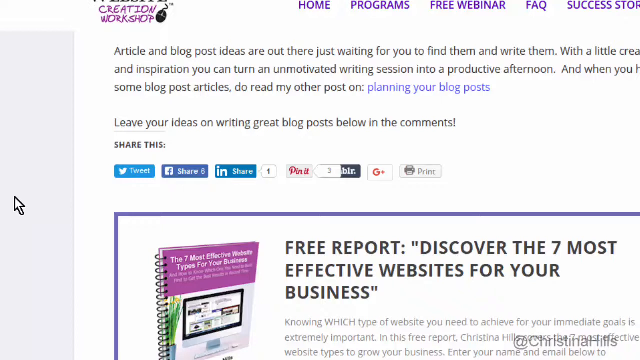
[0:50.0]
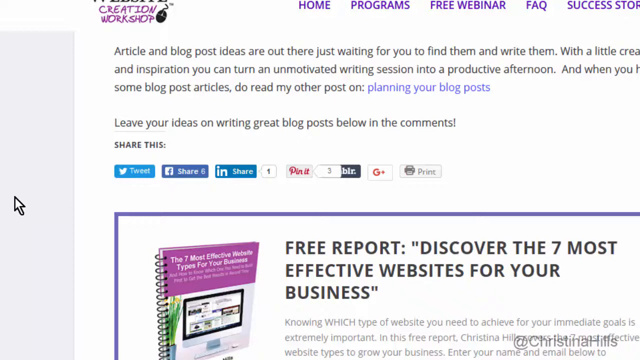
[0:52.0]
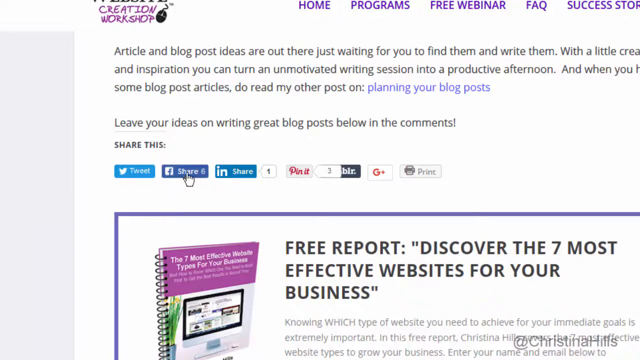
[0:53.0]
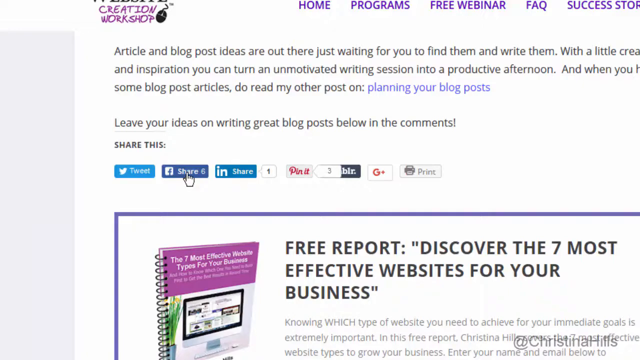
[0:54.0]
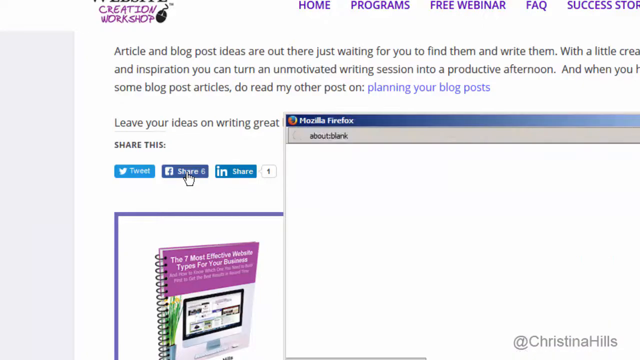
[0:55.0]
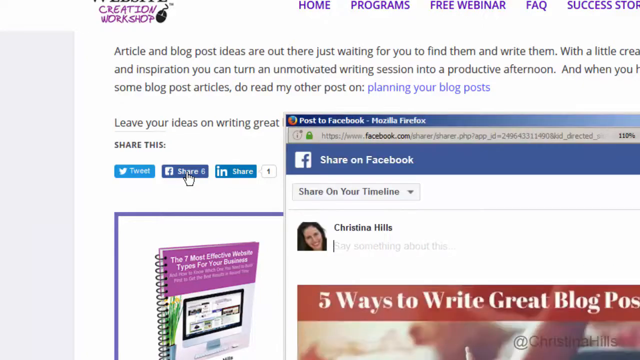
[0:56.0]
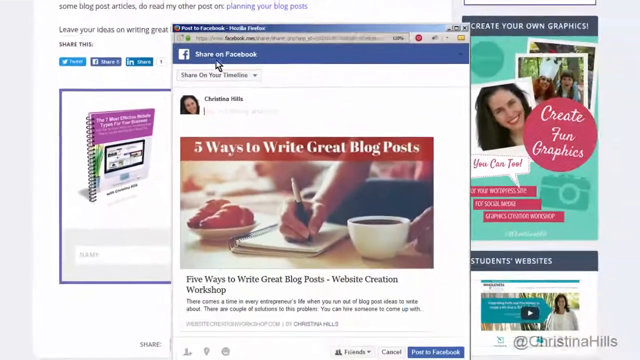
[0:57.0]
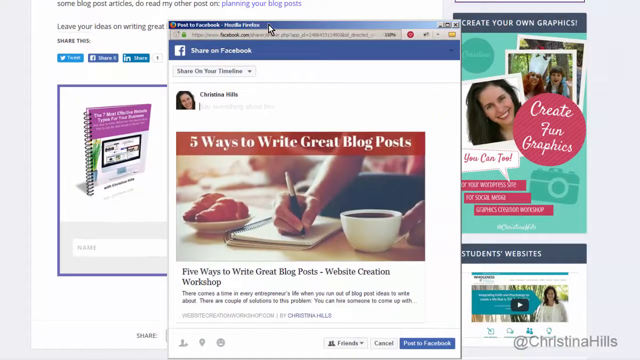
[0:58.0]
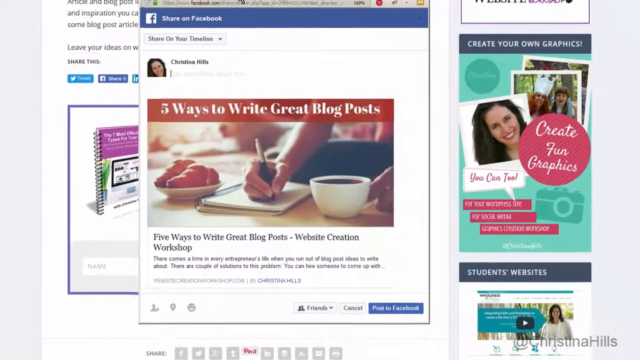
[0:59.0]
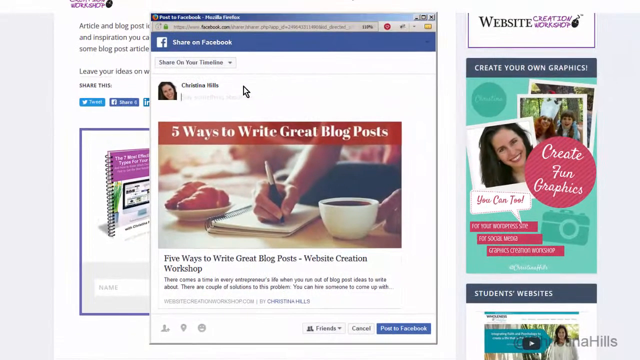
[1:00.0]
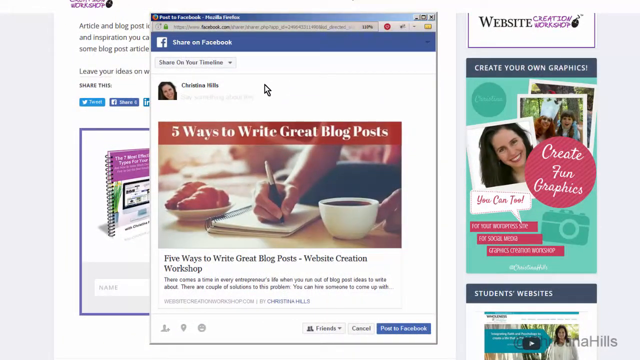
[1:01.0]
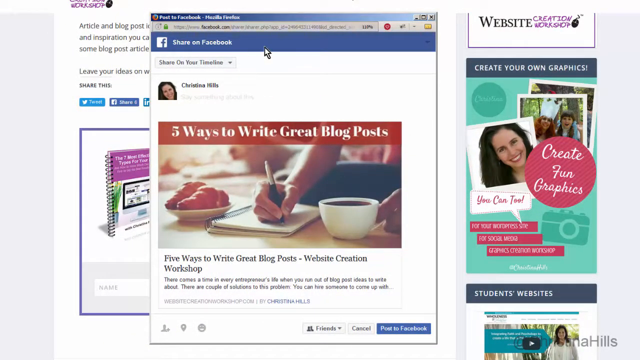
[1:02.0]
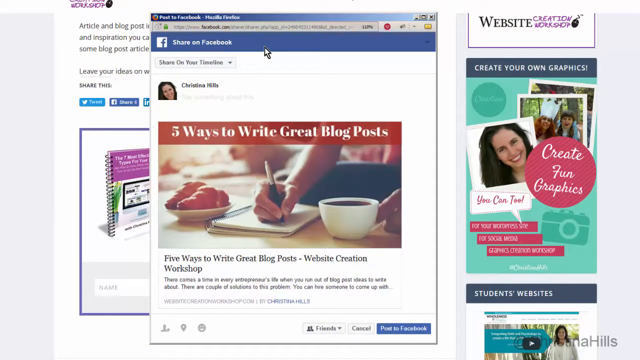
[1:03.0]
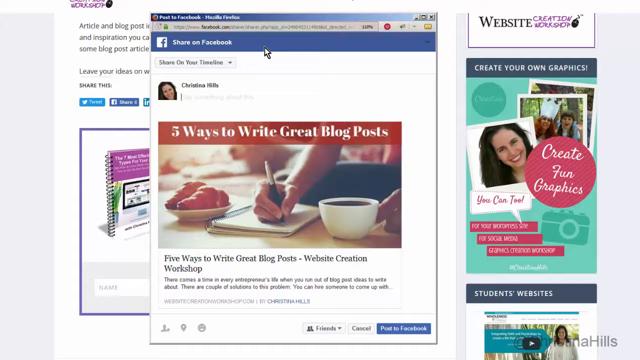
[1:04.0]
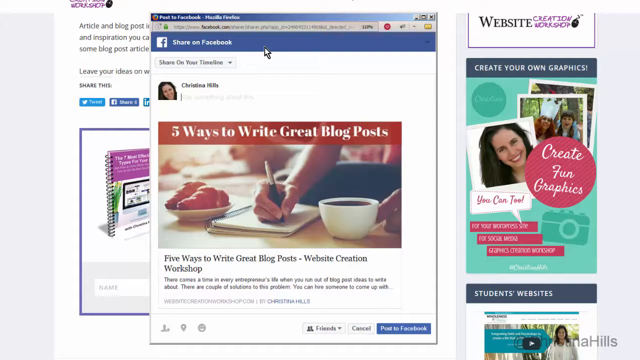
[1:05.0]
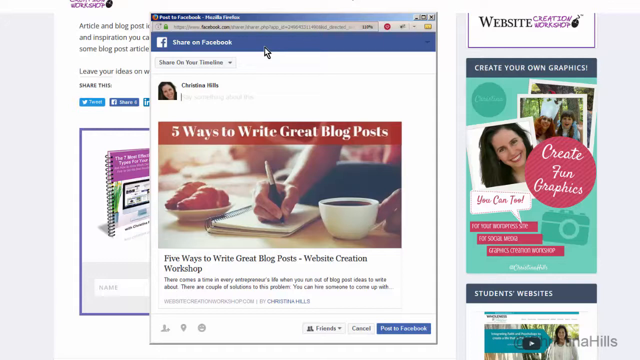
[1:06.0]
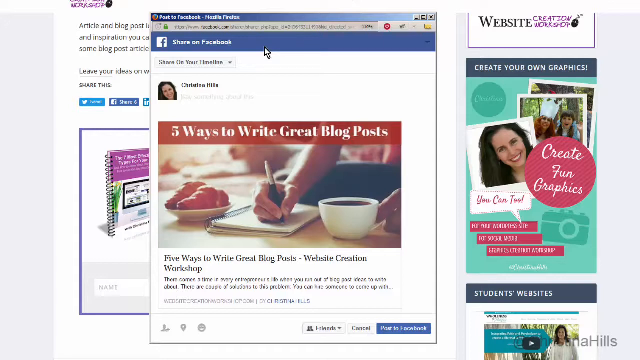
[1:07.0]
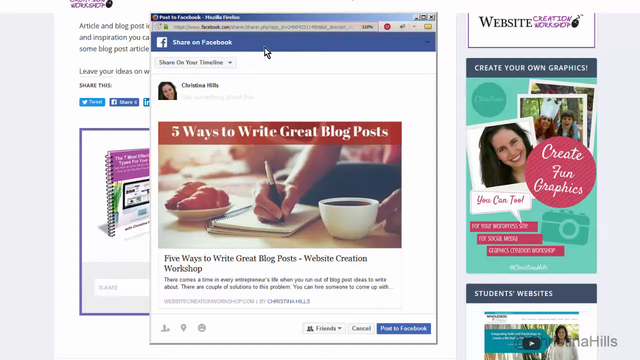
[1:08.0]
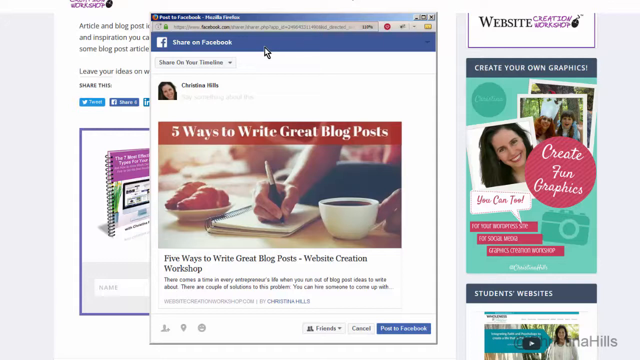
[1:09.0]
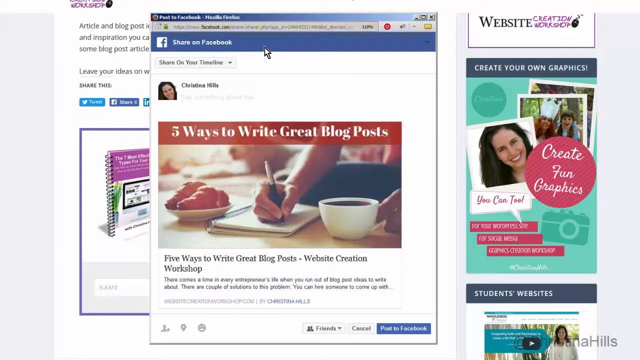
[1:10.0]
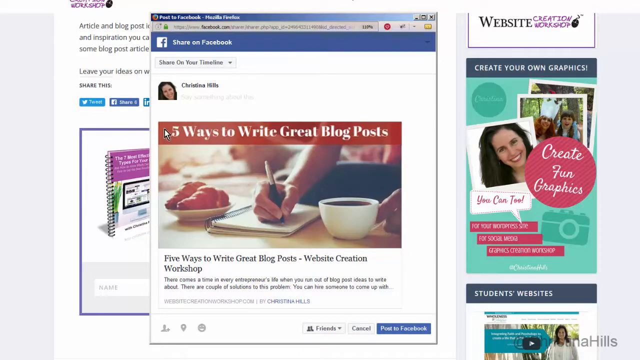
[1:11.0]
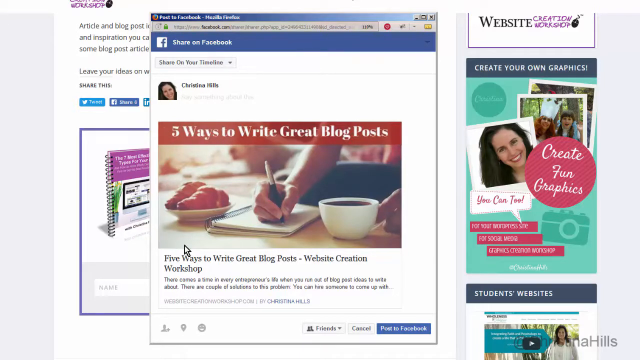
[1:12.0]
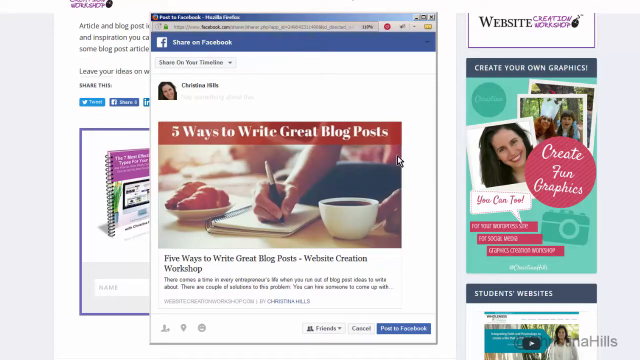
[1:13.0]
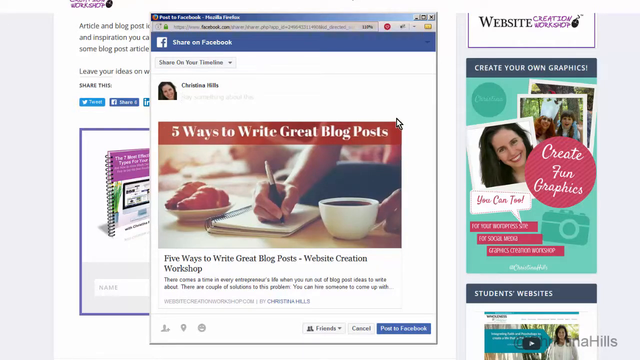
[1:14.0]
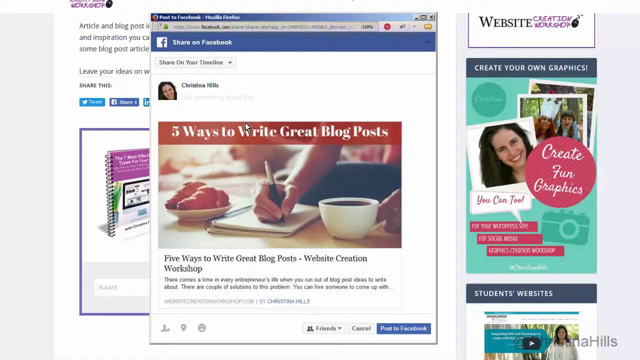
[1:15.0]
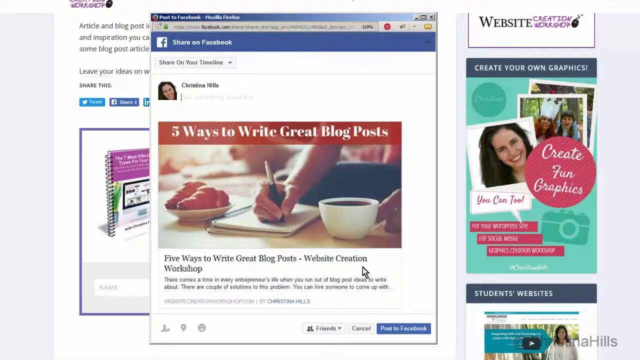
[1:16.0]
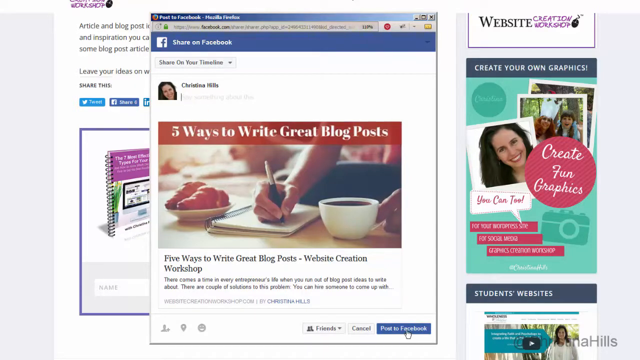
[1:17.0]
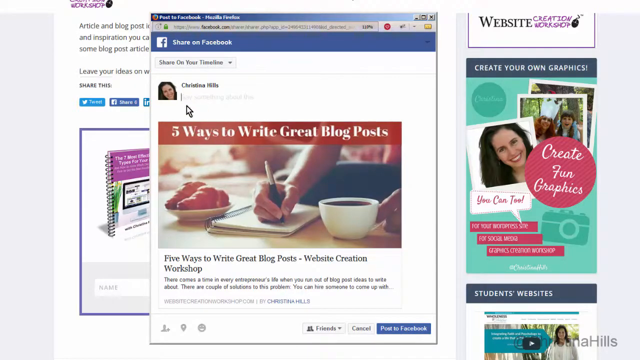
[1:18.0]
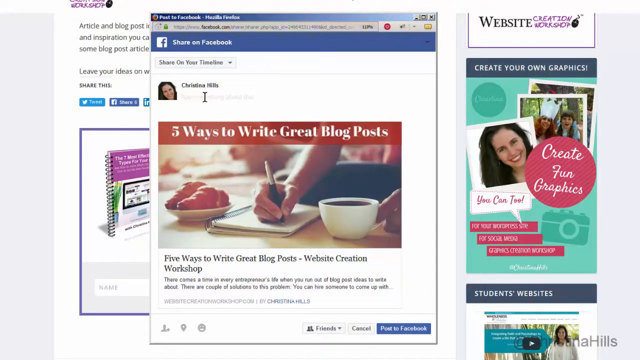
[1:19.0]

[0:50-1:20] Someone shares a web article to Facebook. The bottom portion of an article posted on a site called Website Creation Workshop is visible, and the cursor moves over to the Facebook share icon. When it is clicked, a new box appears on the screen that says "Share to Facebook Mozilla Firefox." In the box is a profile picture for Christina Hills next to her name, and below it an article entitled "5 Ways to Write Great Blog Posts," which appears above a close-up photograph of someone's hands writing in a notebook. The cursor grabs the top of the box and pulls it up to the top of the computer screen, then hovers over the article itself.